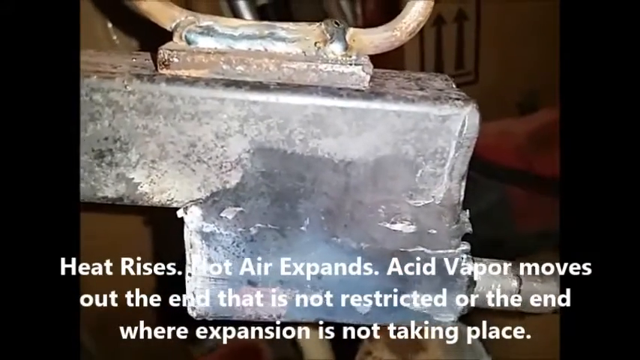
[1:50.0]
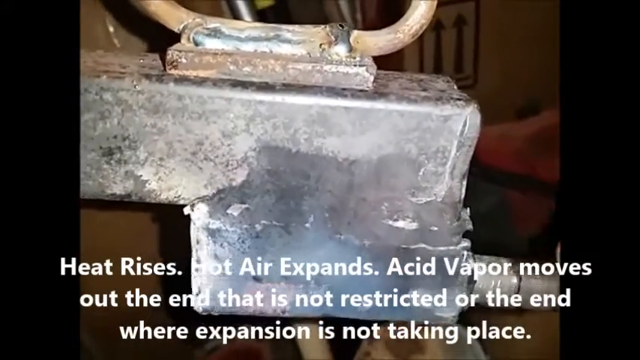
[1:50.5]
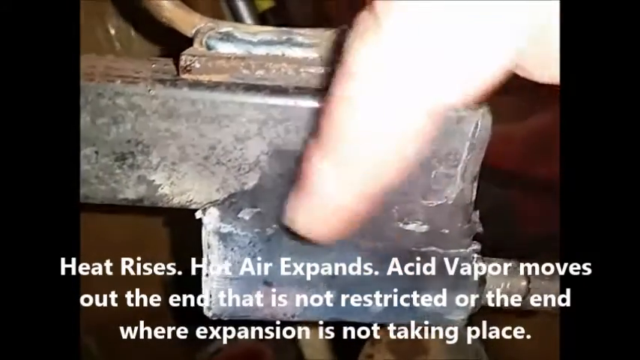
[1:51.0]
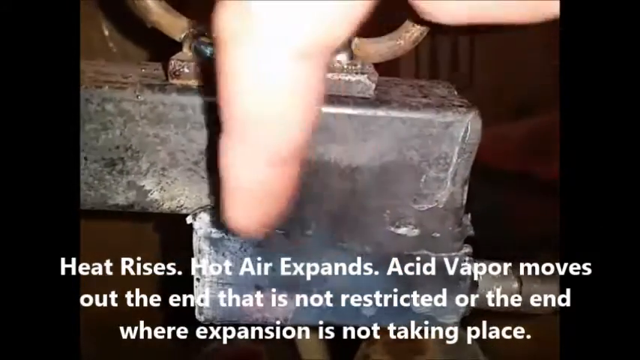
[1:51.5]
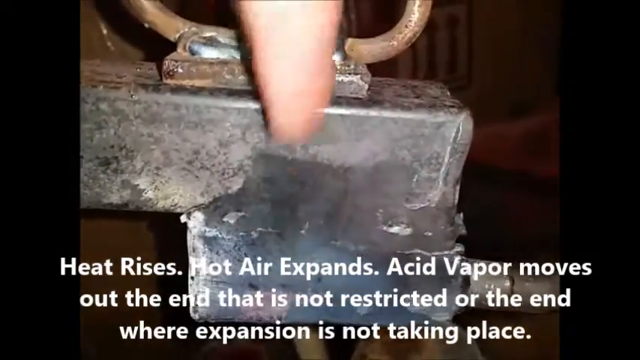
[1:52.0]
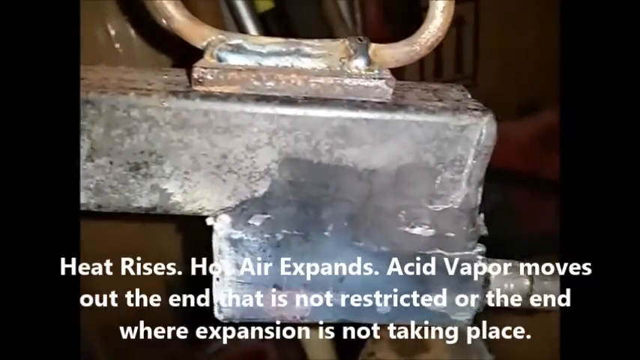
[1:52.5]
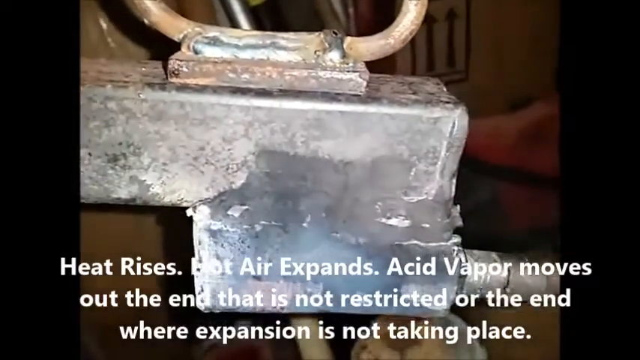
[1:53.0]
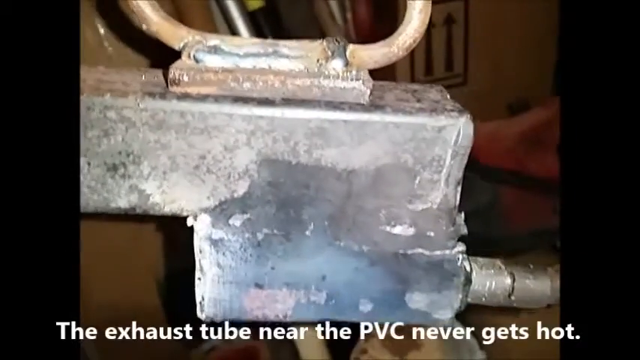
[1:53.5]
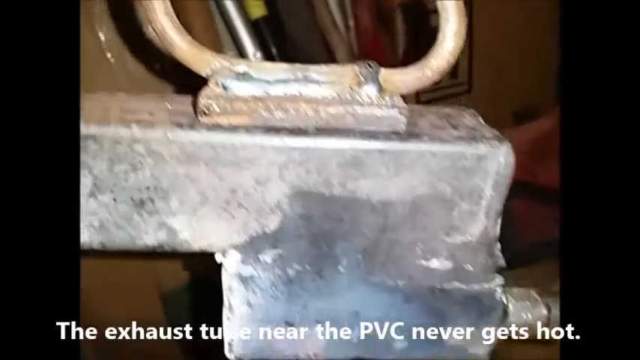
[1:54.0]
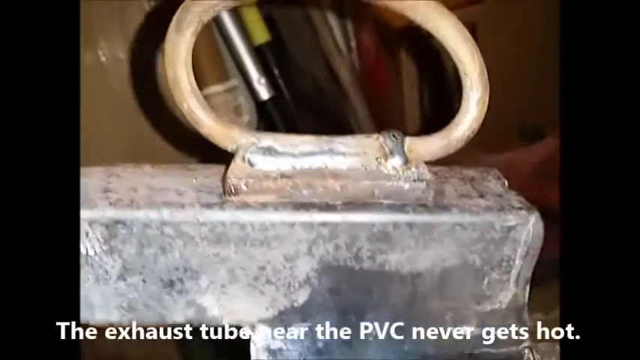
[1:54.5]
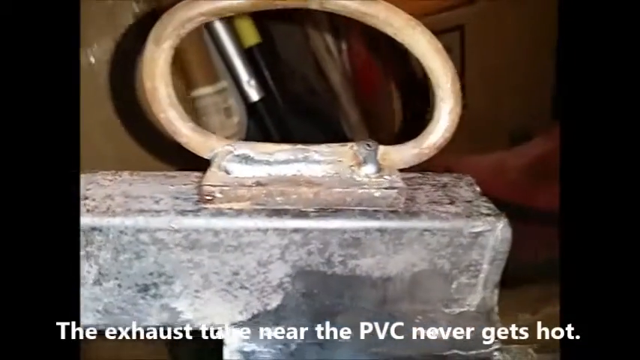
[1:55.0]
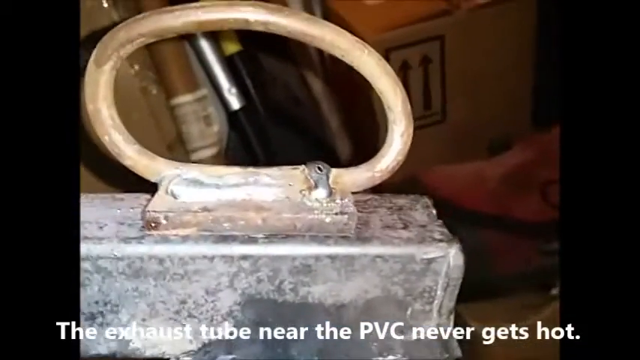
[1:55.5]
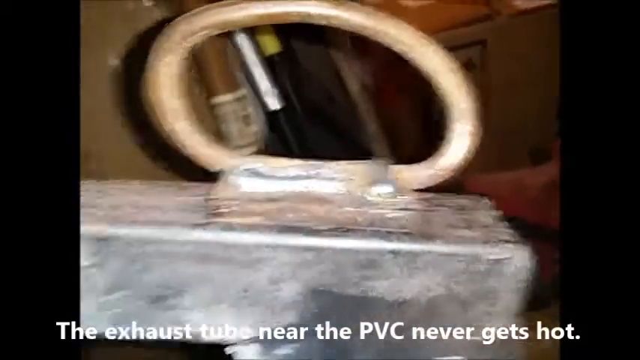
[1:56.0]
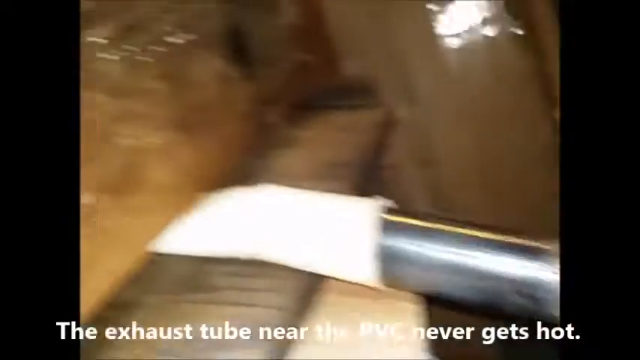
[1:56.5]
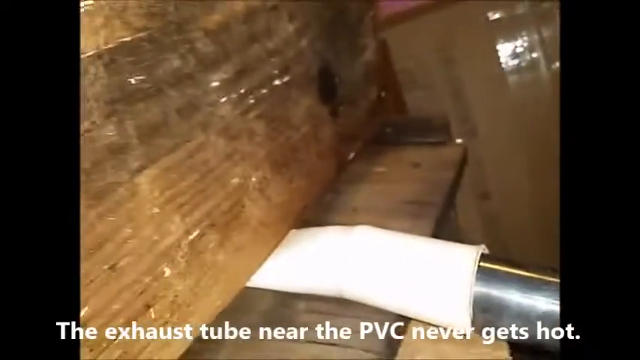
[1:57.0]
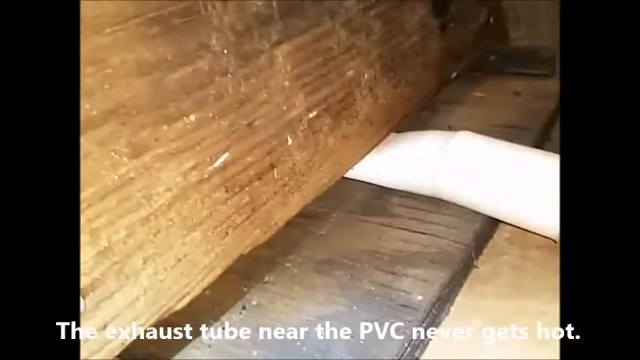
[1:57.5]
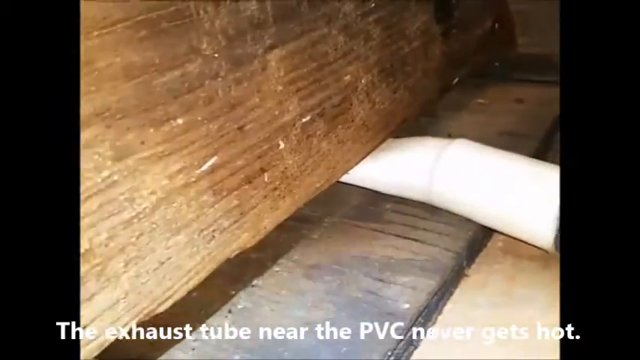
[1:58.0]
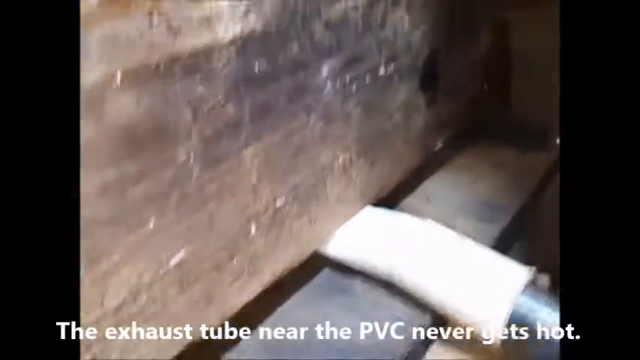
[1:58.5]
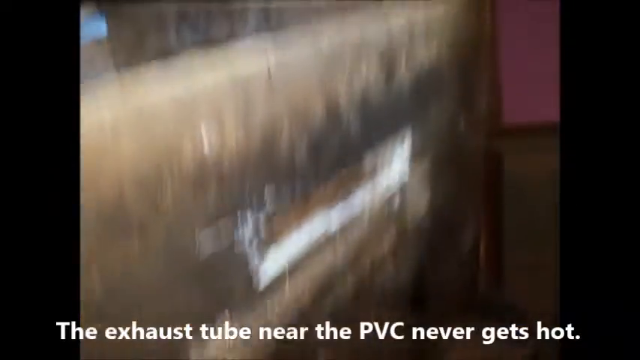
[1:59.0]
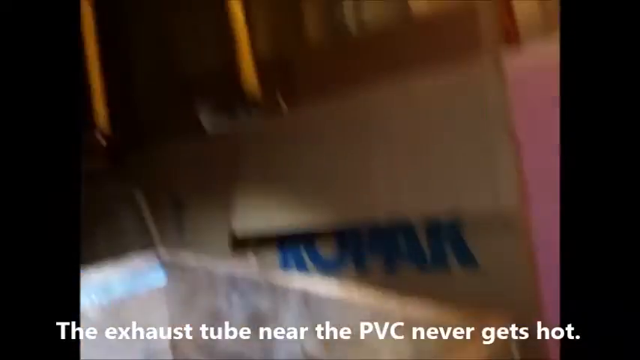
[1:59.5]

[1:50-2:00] Text reads "heat rises, hot air expands, acid vapor moves out the end that is not restricted, or the end where expansion is not taking place." A very close-up shot shows the side of the contraption with the cap on it that is shooting the water vapor into the box. The person's hand points with a finger to the side of the contraption, and text reads "the exhaust tube near the PVC never gets hot." The camera pans over to where the pipe goes into the box, then goes up above the box to show down into it.